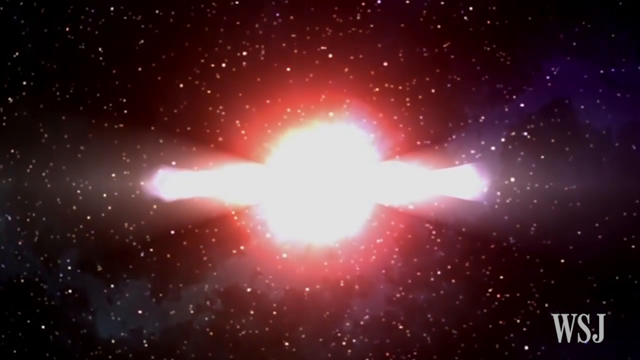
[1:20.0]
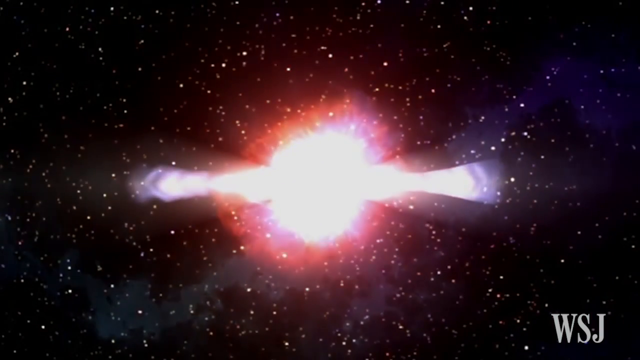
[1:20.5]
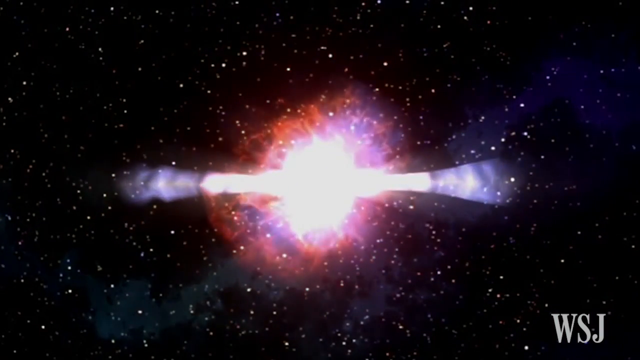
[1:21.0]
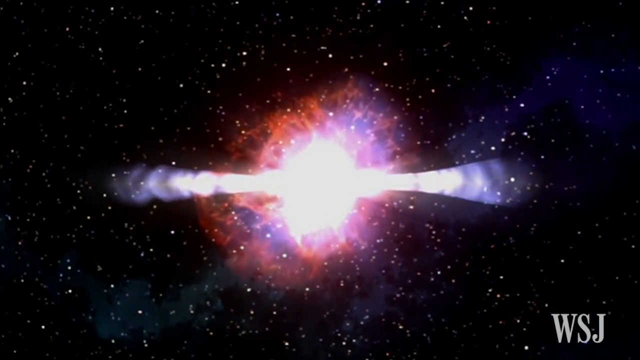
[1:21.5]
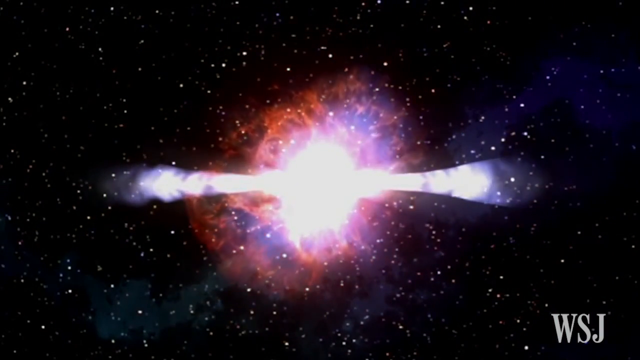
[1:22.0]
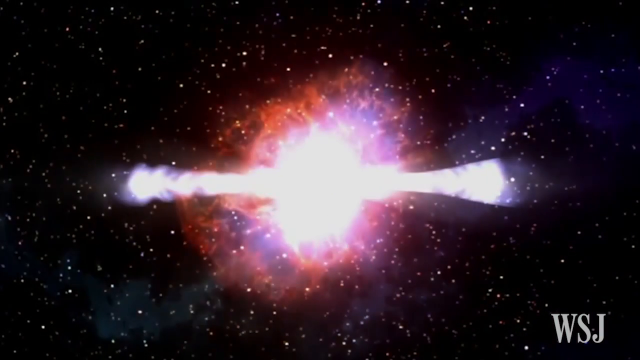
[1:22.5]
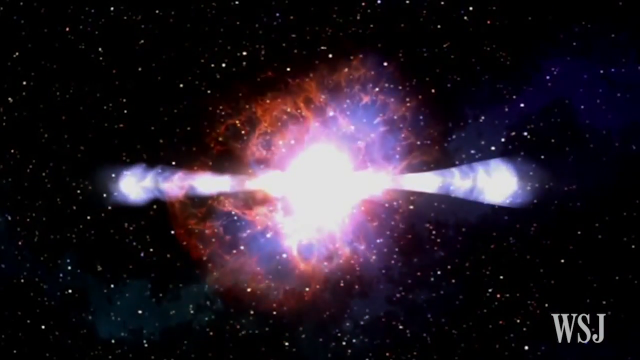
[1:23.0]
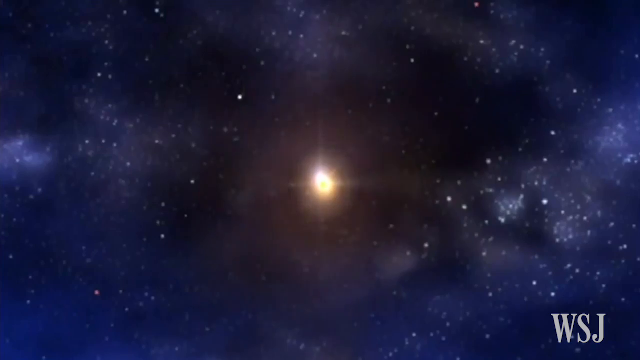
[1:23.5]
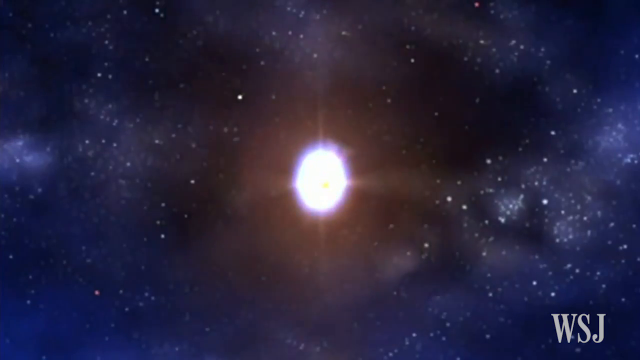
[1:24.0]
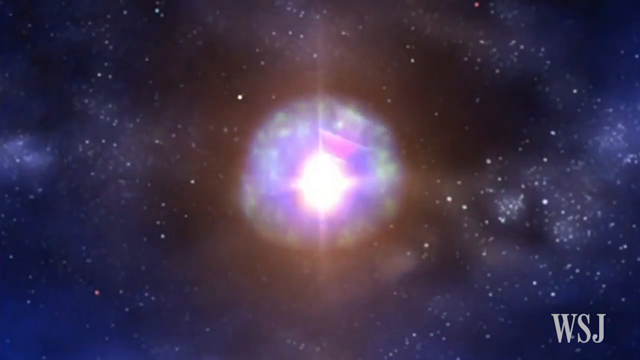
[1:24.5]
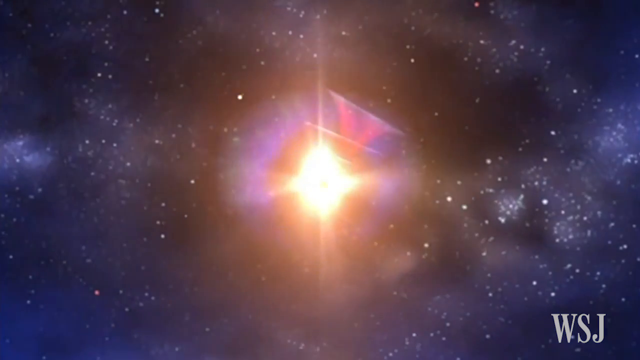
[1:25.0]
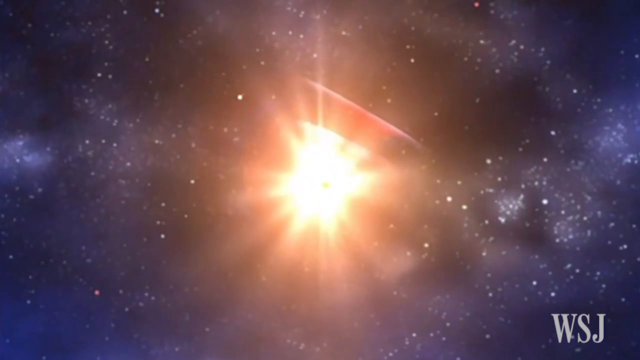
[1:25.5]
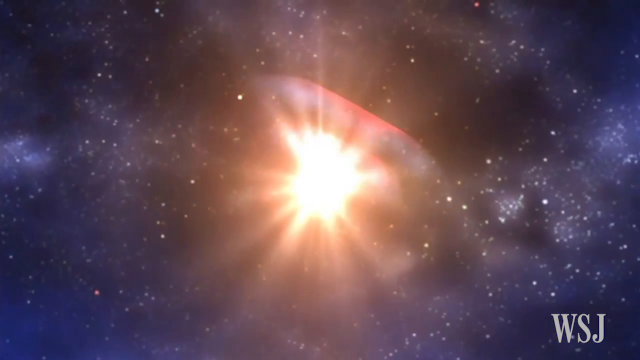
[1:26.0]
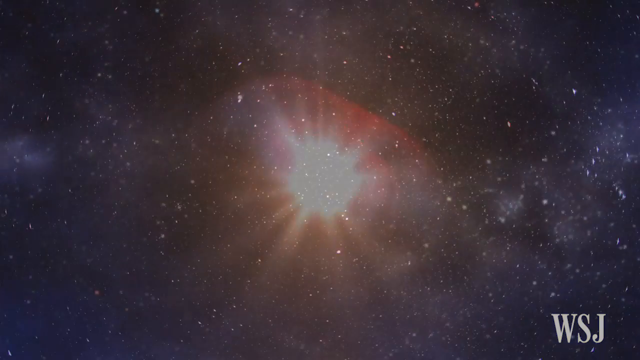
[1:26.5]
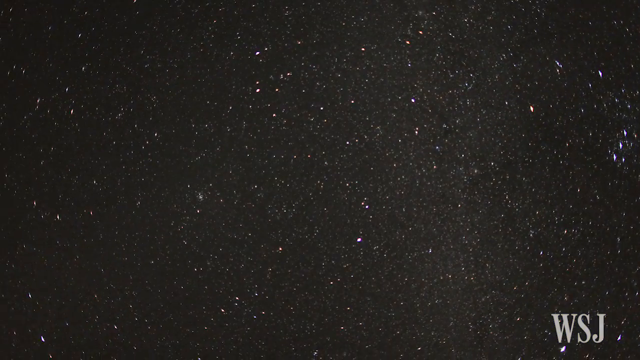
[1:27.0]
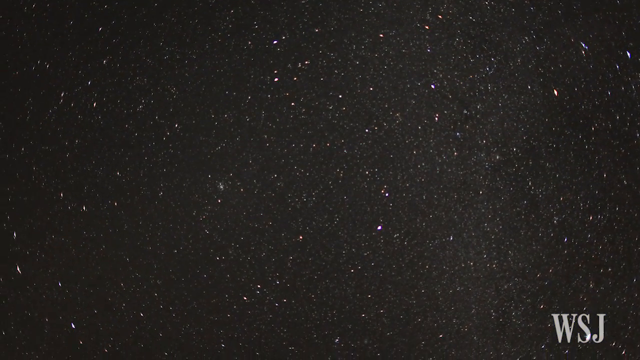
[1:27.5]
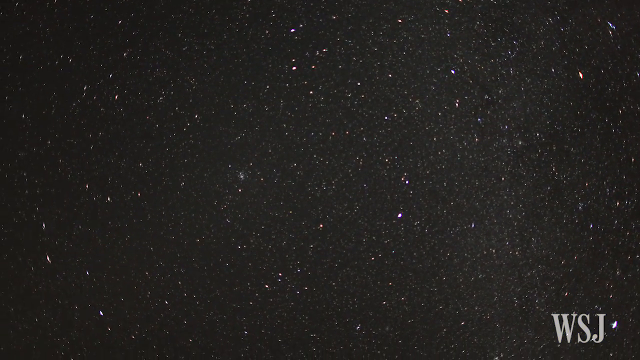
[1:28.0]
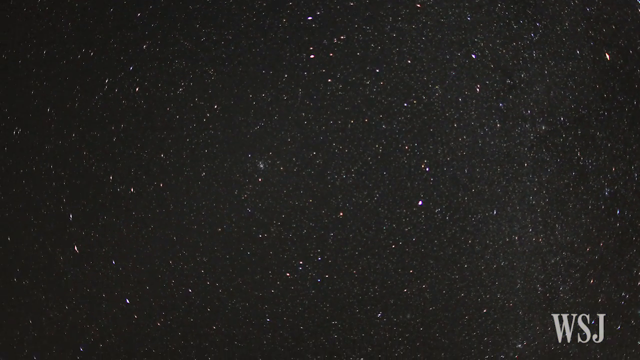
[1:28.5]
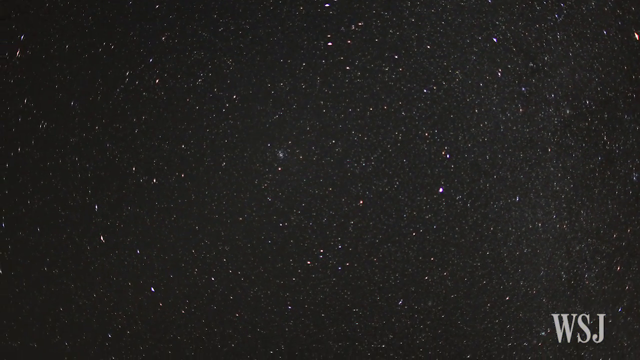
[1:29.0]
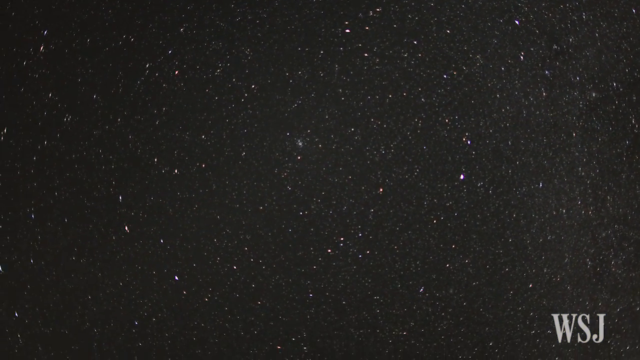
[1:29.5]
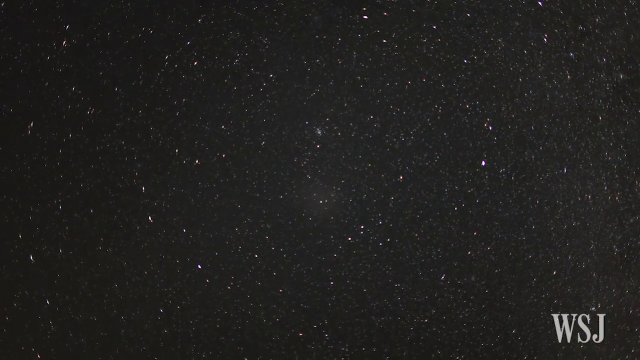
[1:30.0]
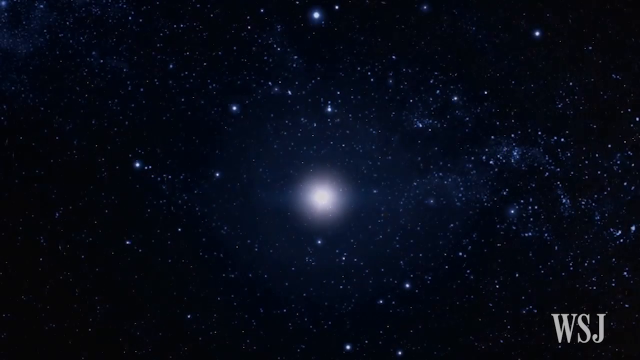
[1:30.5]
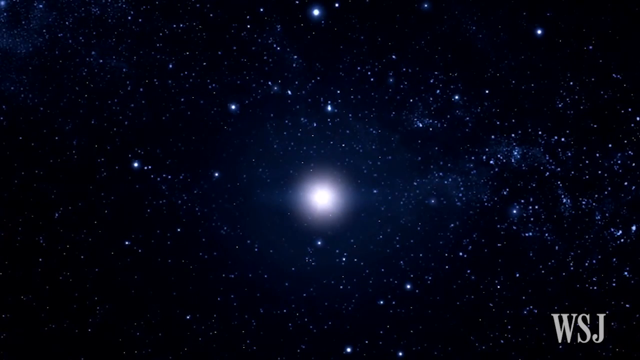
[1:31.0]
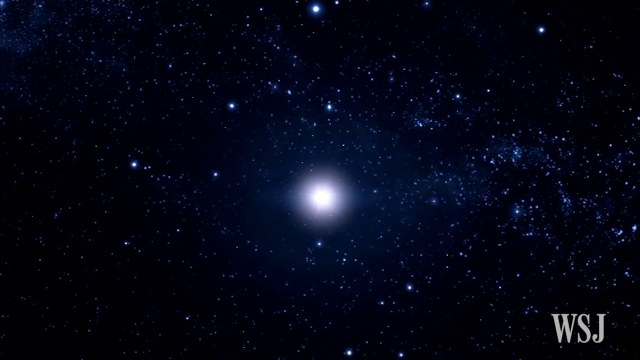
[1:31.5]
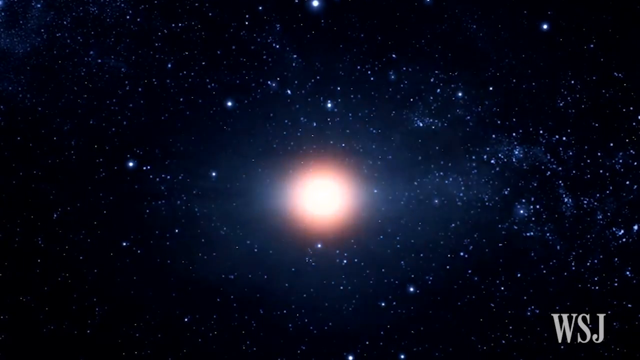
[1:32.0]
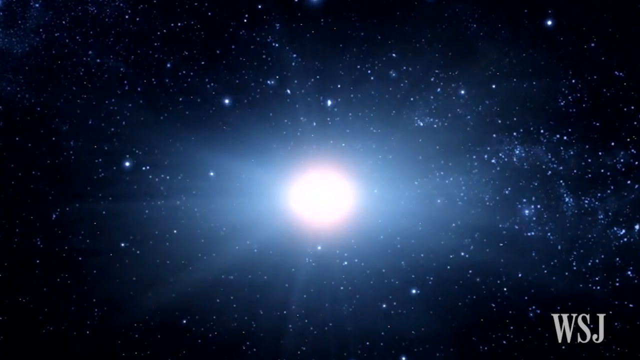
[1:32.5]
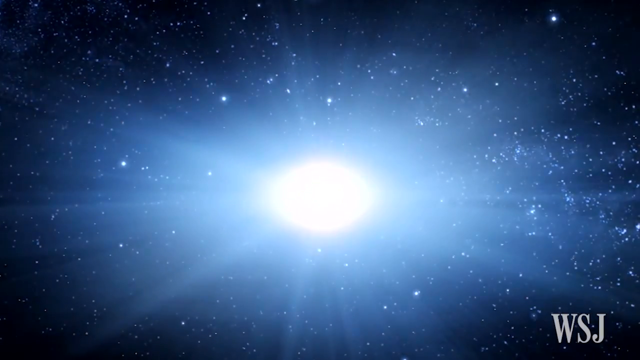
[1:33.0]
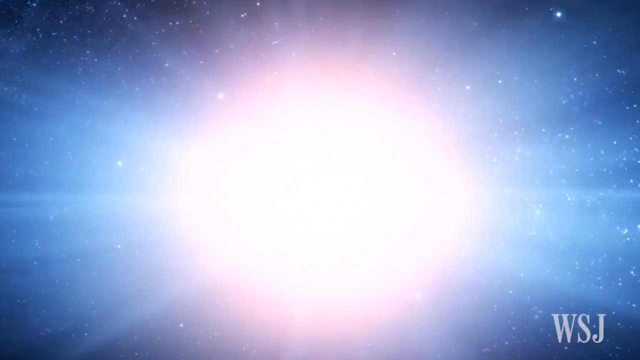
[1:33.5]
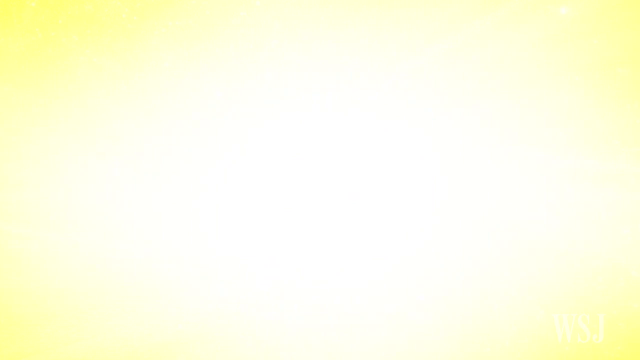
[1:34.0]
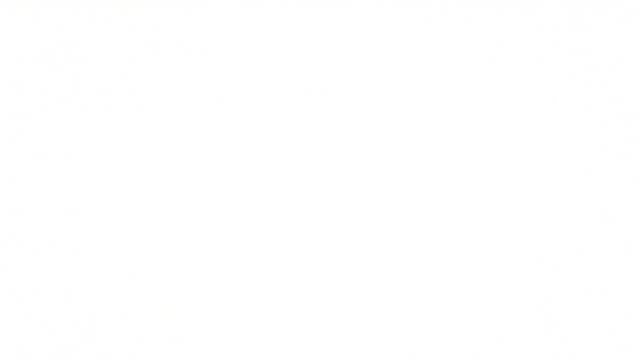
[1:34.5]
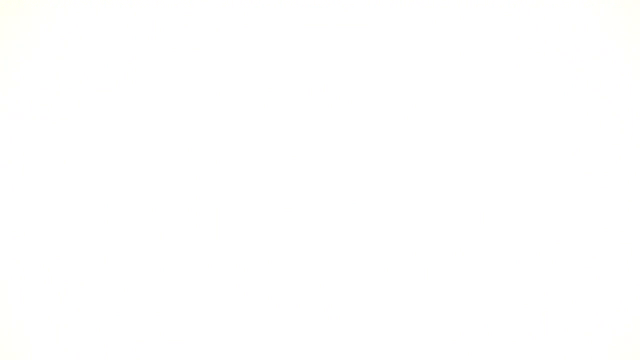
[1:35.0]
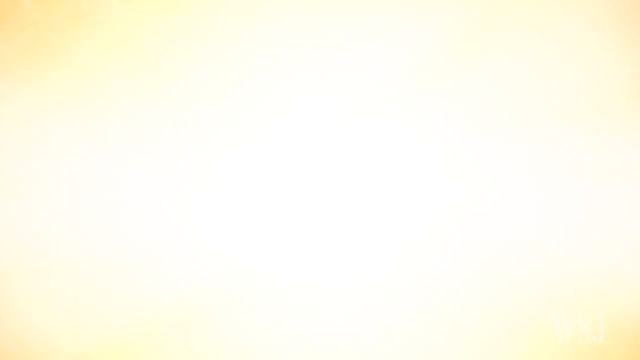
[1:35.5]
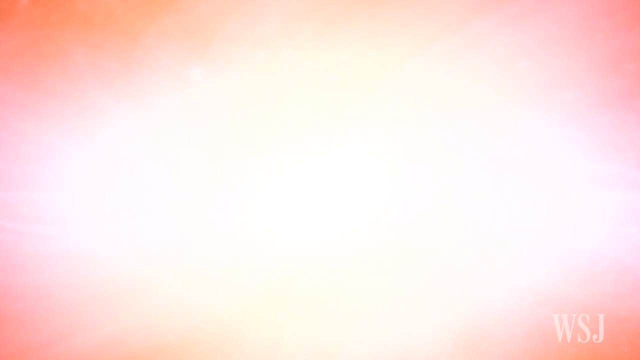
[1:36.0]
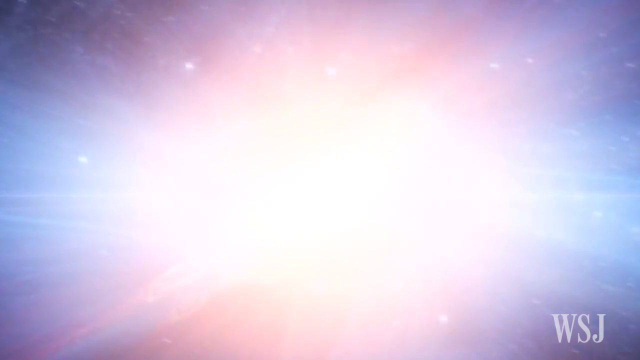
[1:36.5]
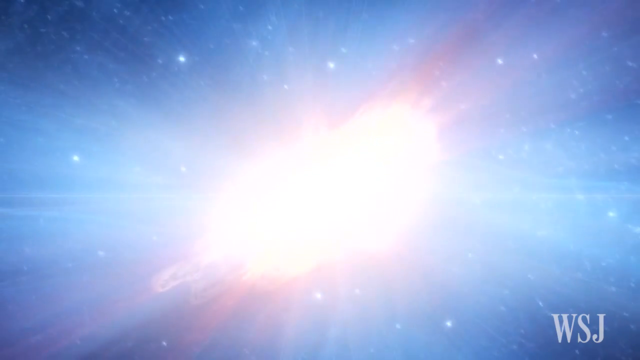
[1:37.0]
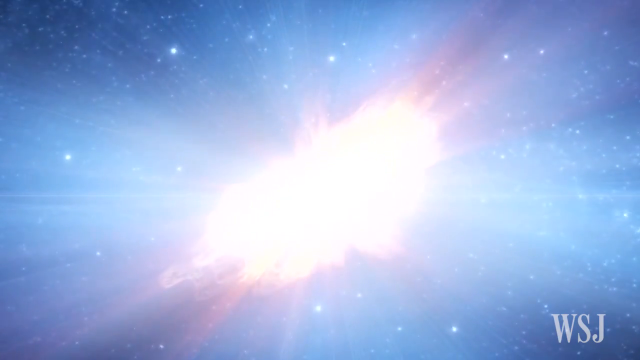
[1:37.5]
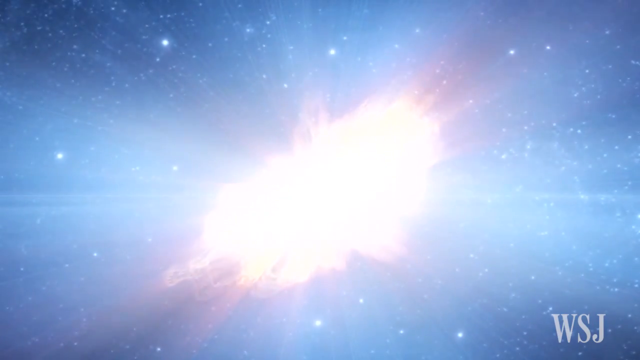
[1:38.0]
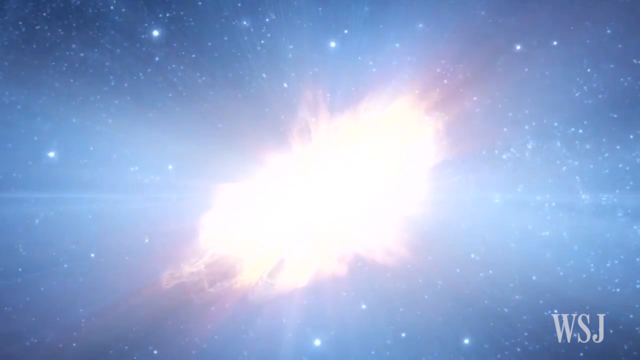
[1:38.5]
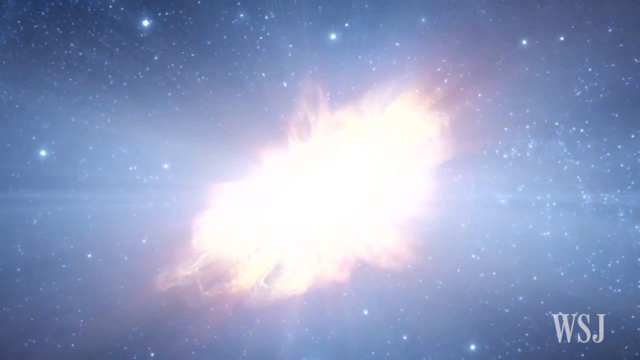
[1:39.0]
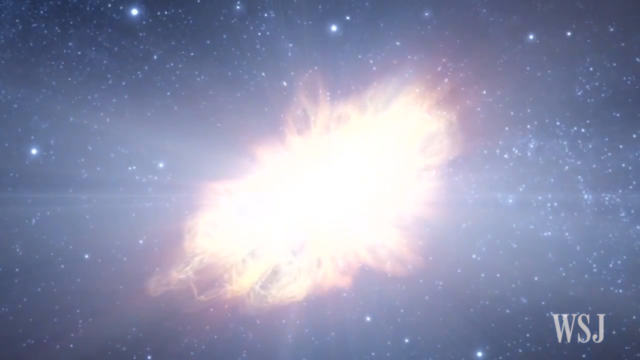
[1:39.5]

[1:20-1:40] The exploding sun is shown, then another sun flares up and disappears. Next is the vastness of outer space: a black void with thousands of stars of varying brightness. The camera pans through them, and the view goes back to the blue star, which explodes again; it seems to have appeared at least once before in the video.